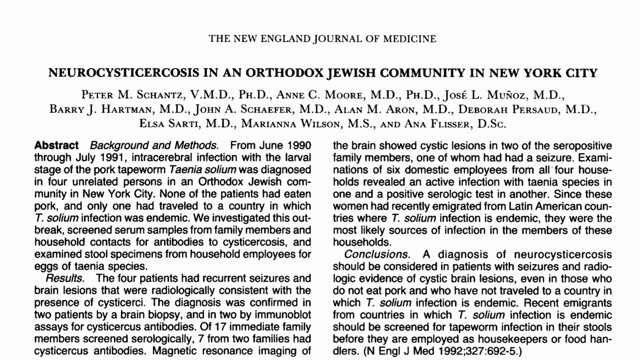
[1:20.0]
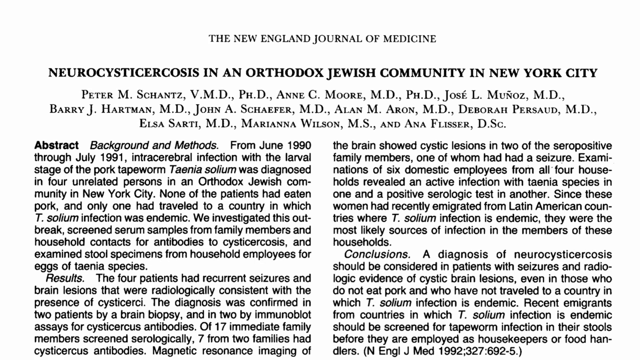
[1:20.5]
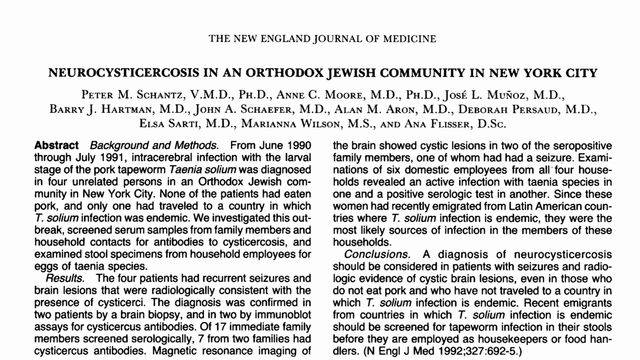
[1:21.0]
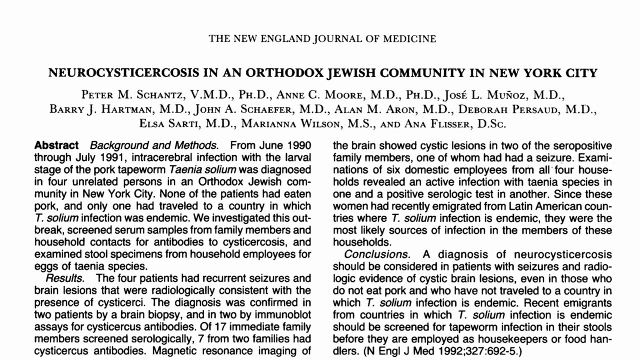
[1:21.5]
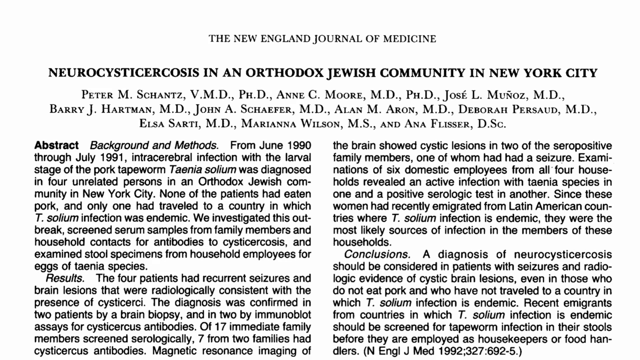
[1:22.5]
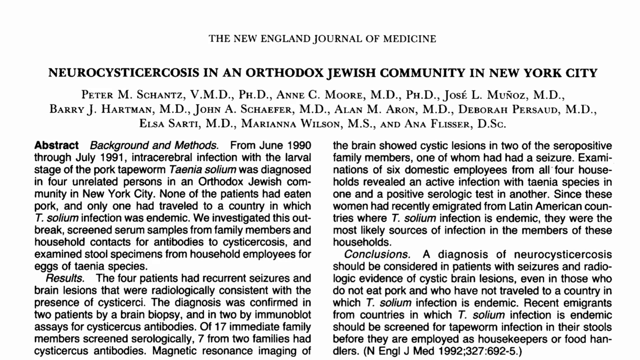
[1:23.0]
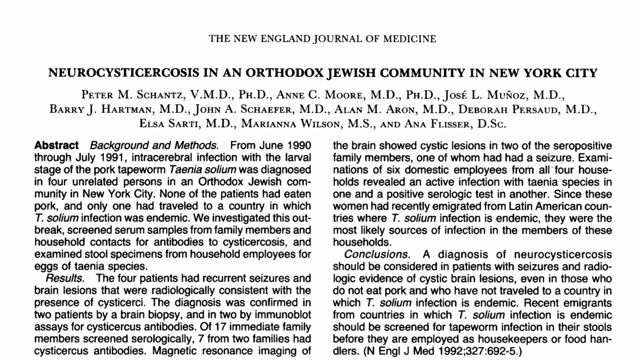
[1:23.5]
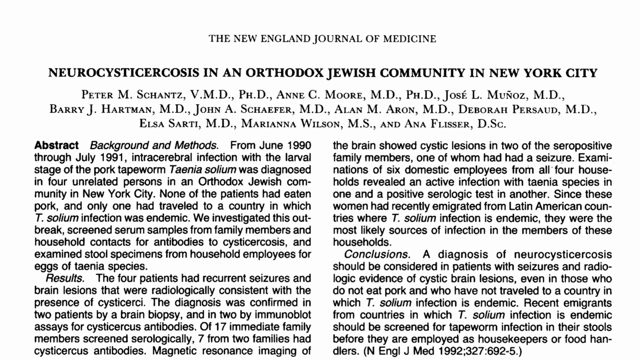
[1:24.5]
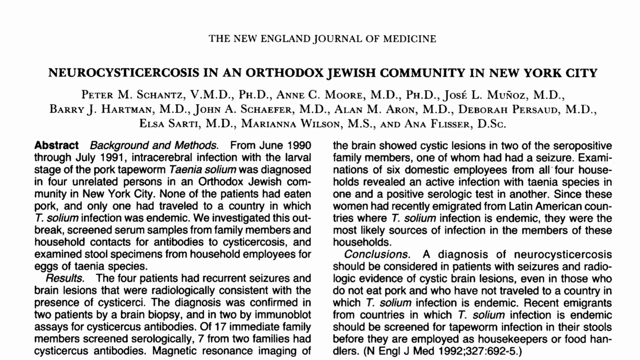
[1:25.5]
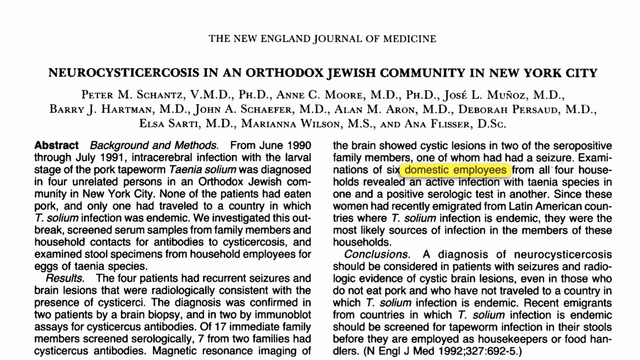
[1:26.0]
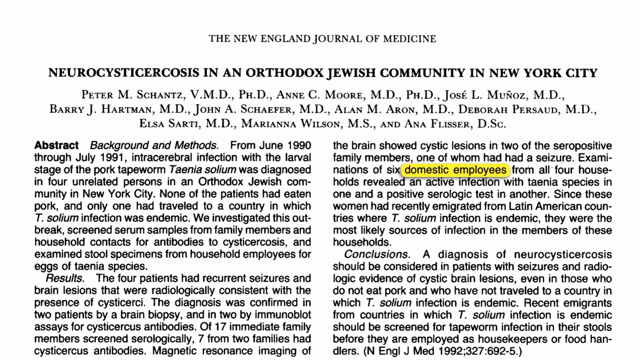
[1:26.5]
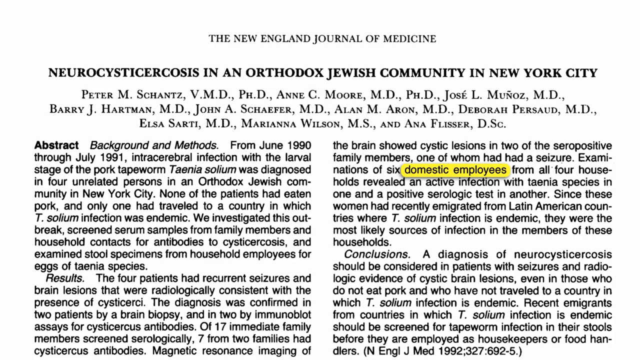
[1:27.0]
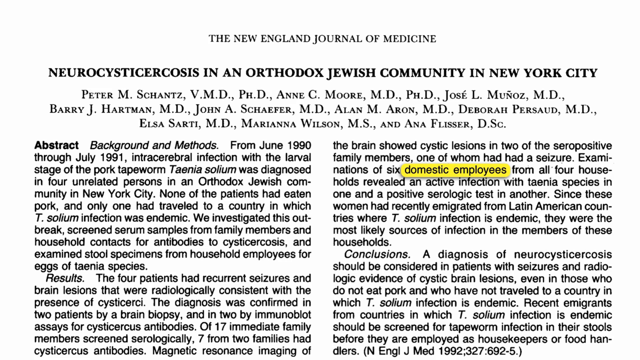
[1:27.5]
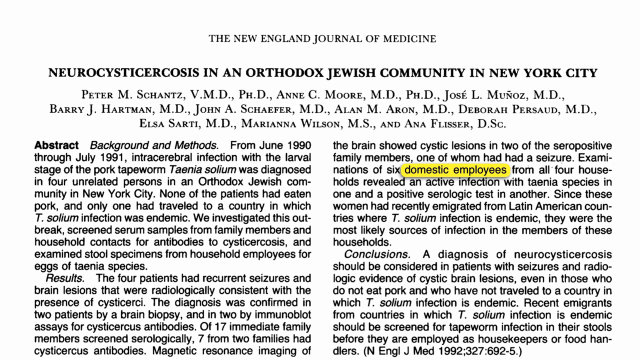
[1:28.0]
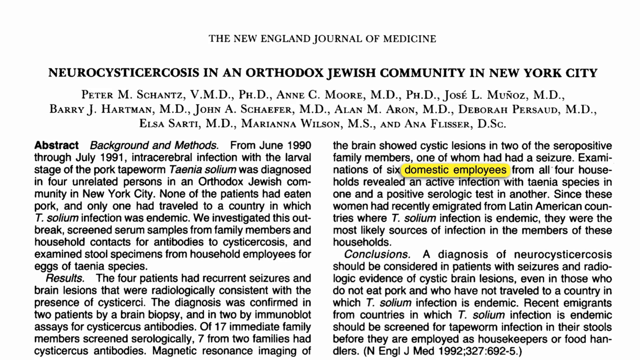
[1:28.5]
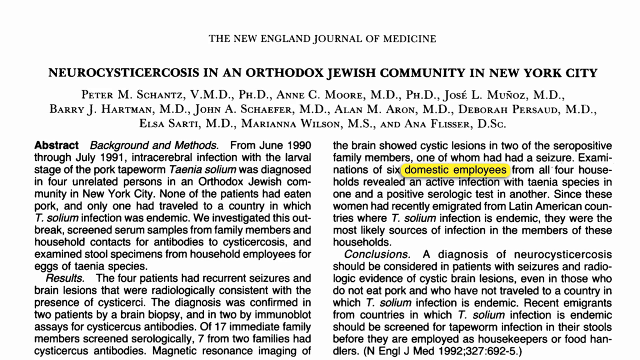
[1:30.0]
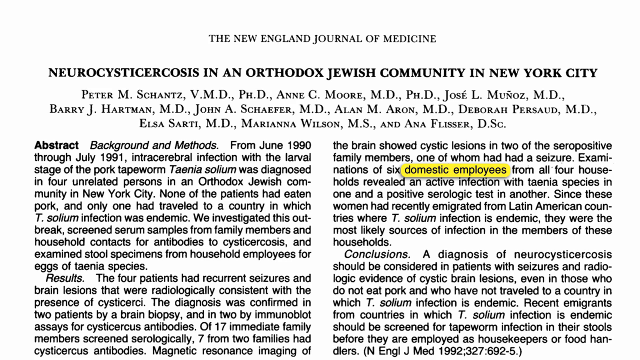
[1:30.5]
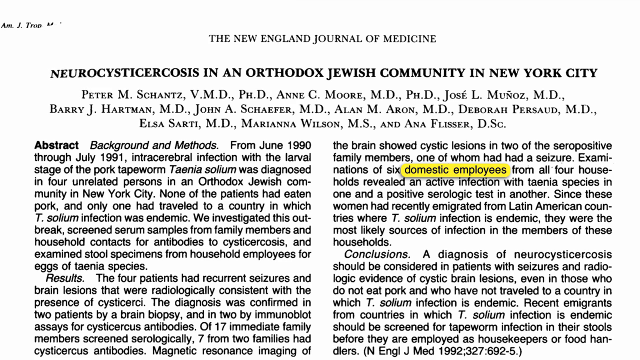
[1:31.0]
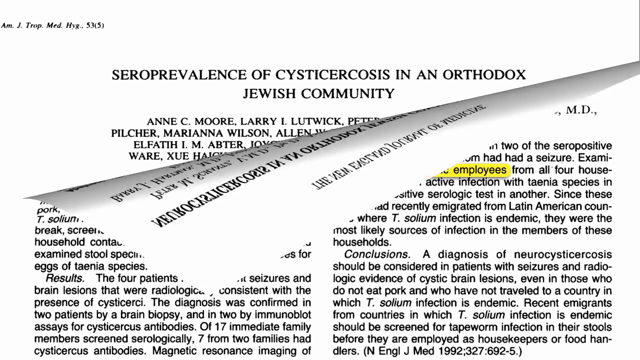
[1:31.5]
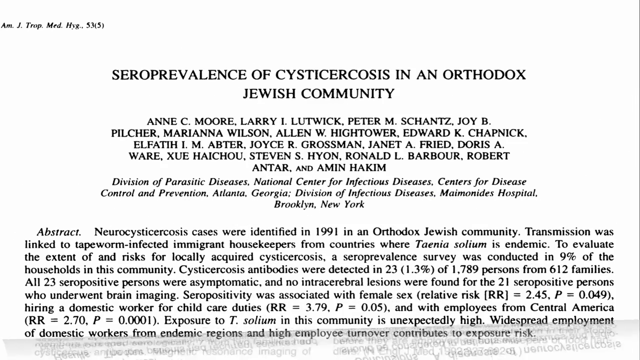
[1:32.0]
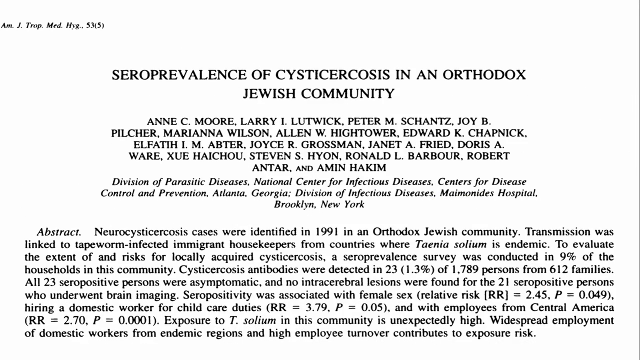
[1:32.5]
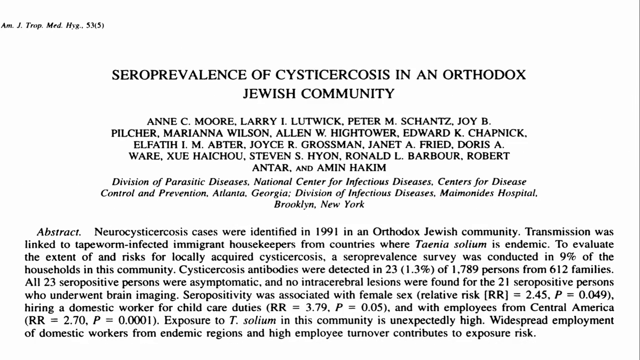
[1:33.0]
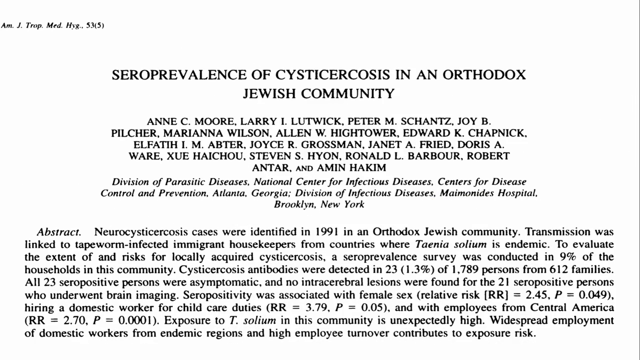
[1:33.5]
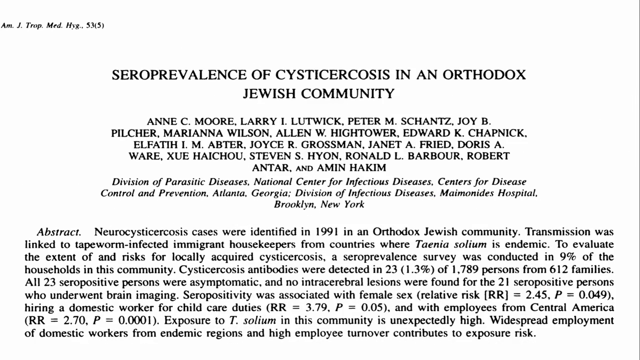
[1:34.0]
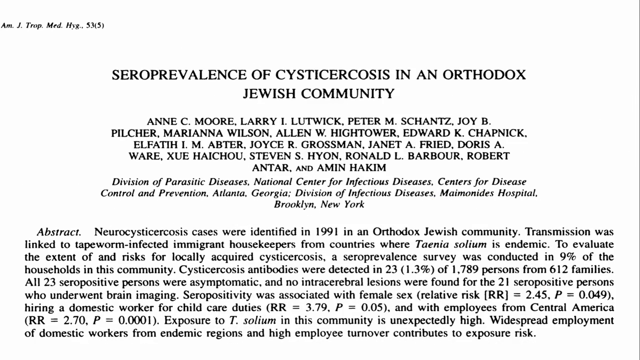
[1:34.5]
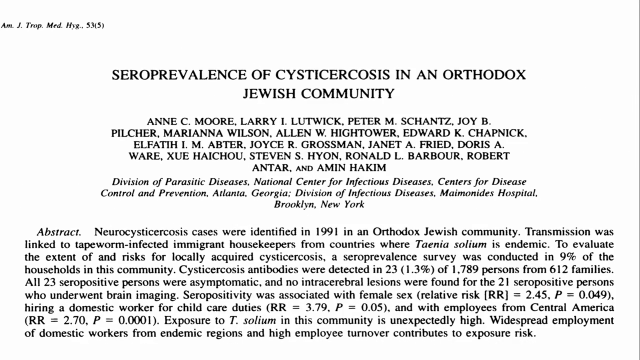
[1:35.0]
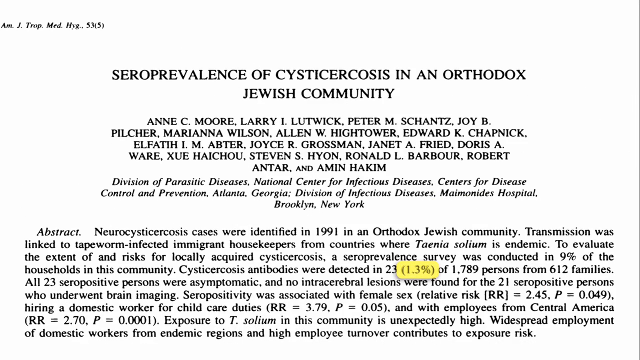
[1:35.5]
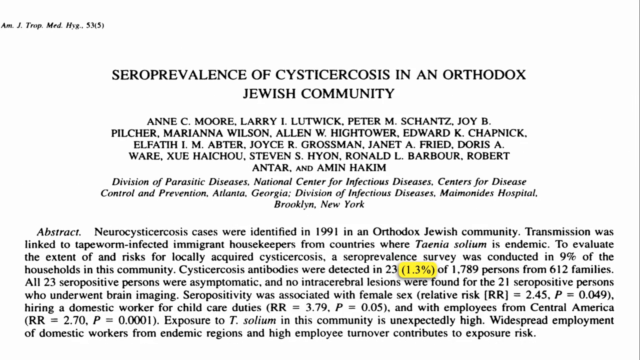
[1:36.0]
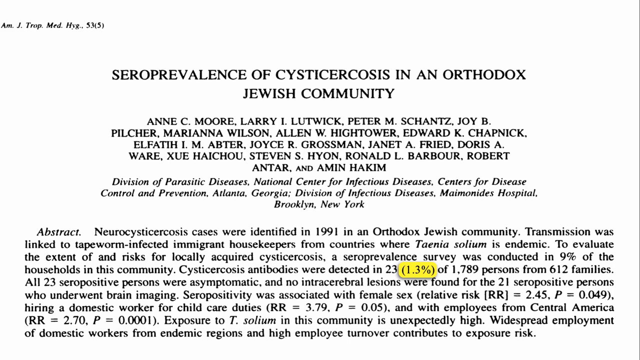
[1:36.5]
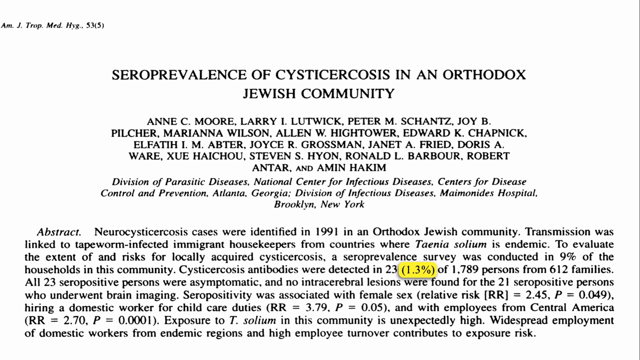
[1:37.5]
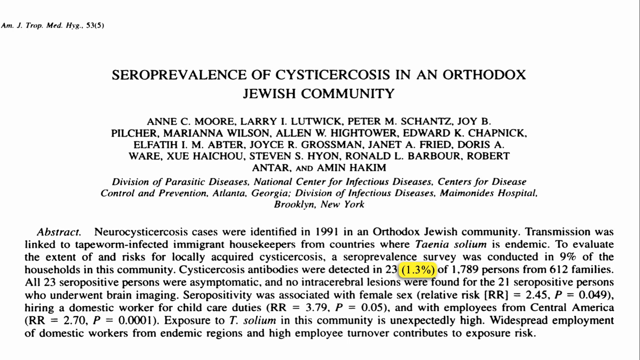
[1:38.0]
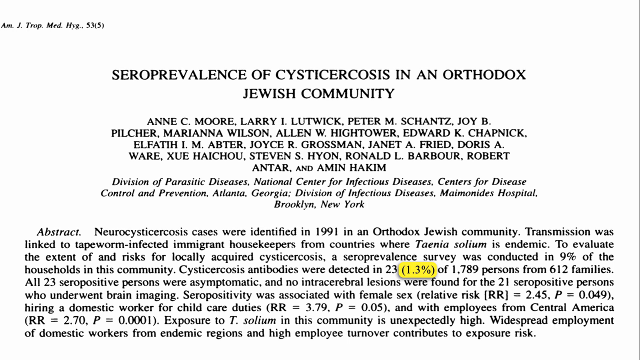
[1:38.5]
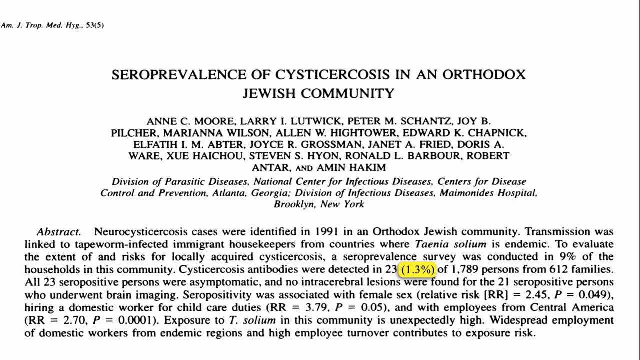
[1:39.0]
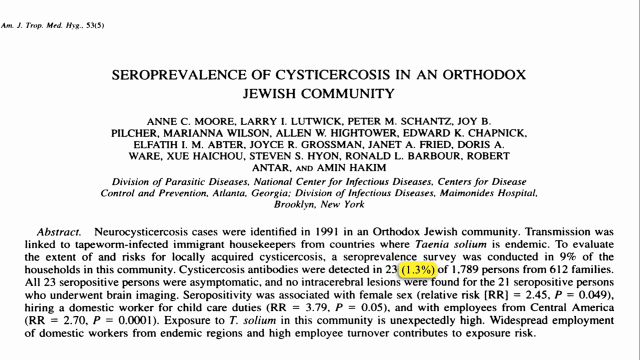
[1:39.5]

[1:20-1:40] The academic paper about neurocysticerosis in a Jewish community is shown again; it apparently describes an investigation into how people who never consumed pork could have developed the illness, concluding that the tapeworm infection was picked up from their servants.